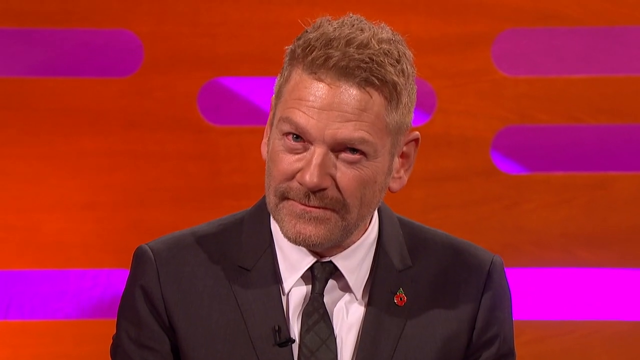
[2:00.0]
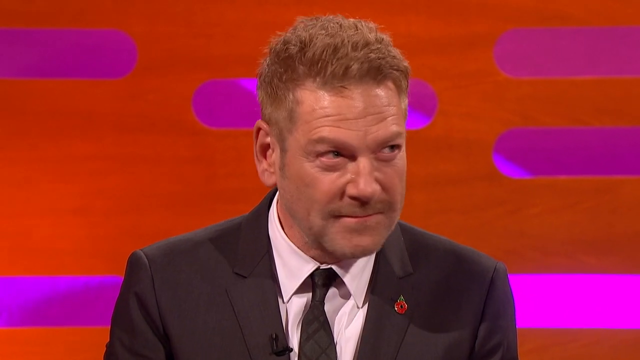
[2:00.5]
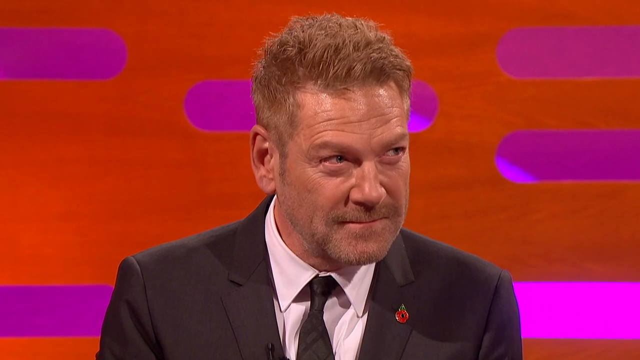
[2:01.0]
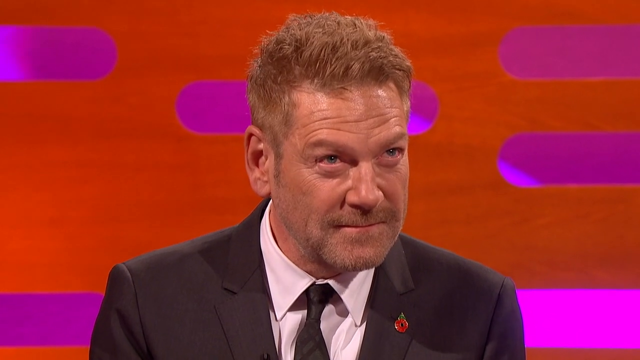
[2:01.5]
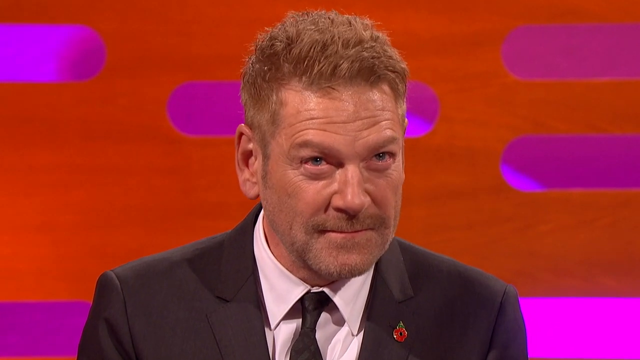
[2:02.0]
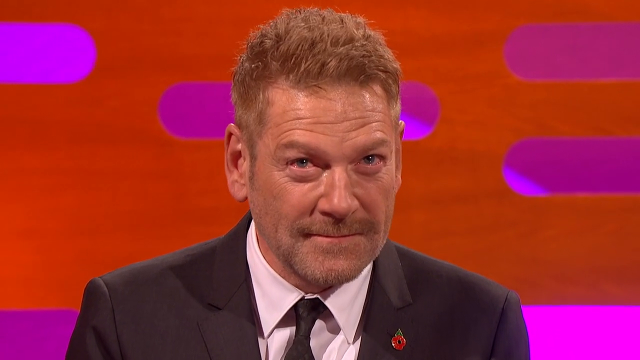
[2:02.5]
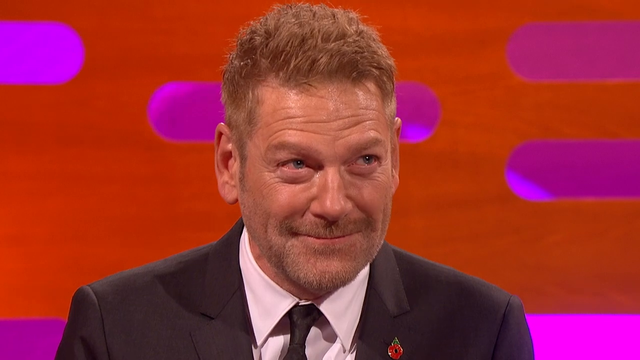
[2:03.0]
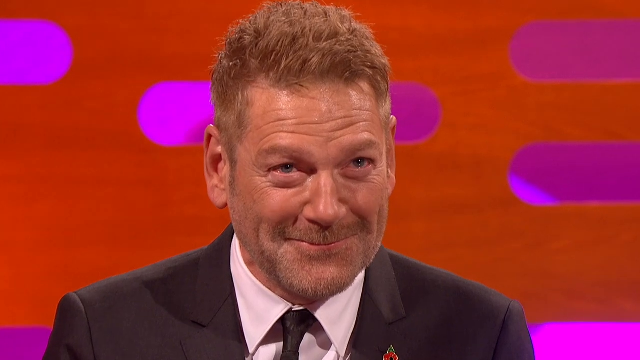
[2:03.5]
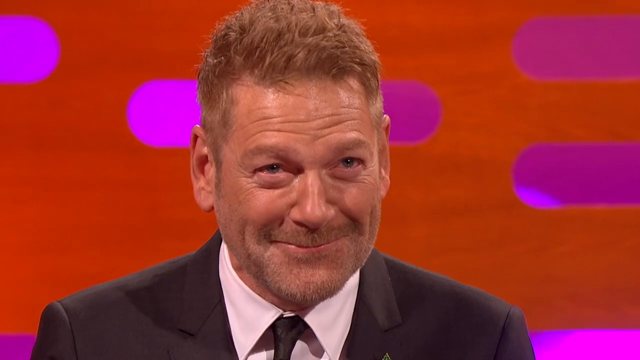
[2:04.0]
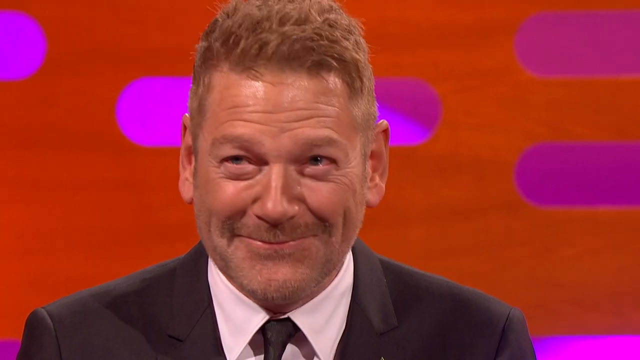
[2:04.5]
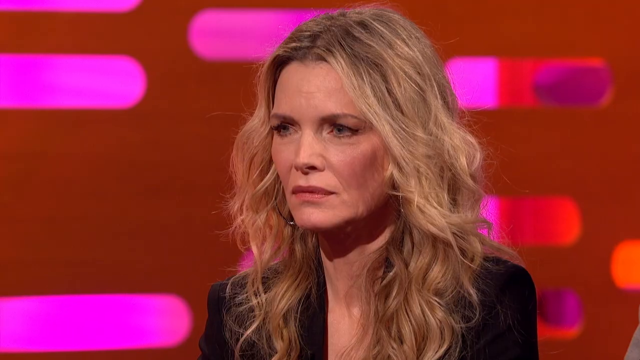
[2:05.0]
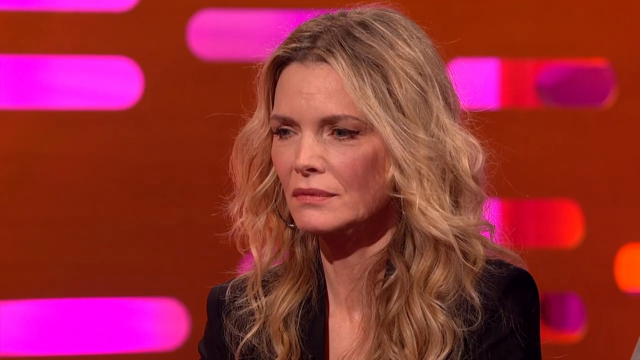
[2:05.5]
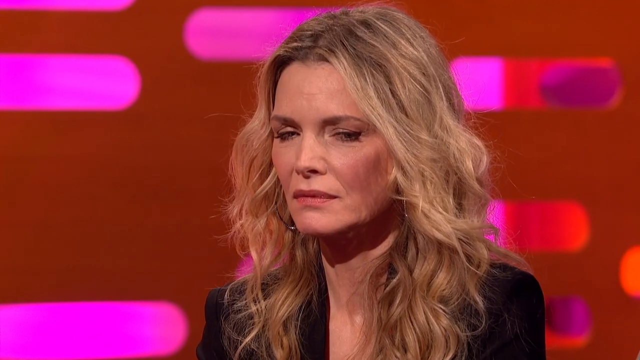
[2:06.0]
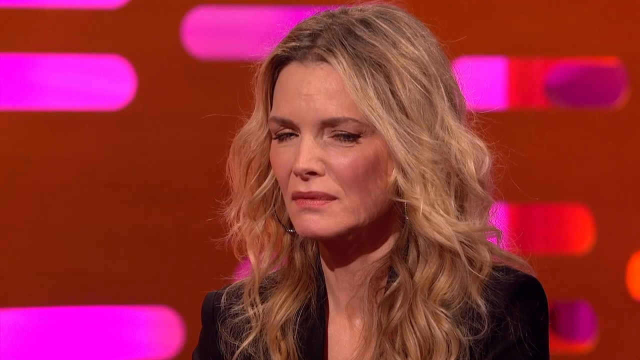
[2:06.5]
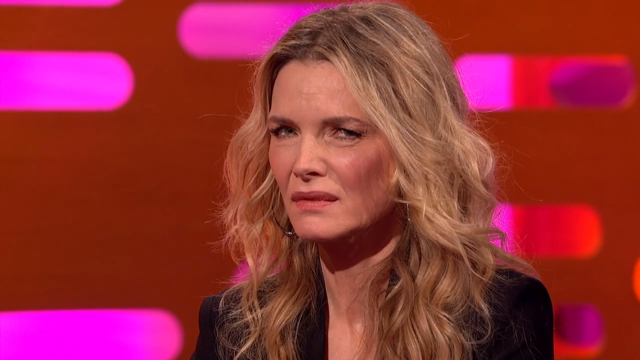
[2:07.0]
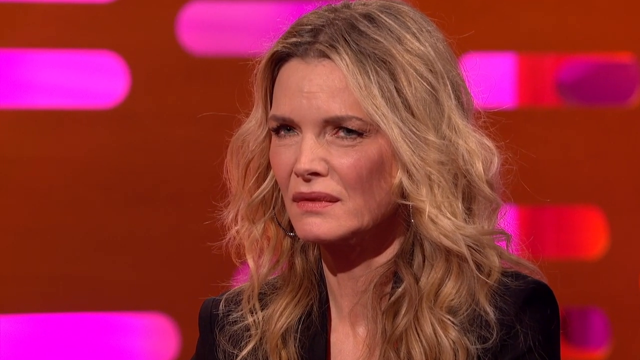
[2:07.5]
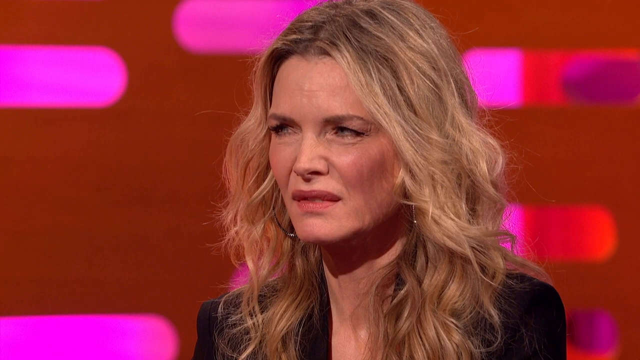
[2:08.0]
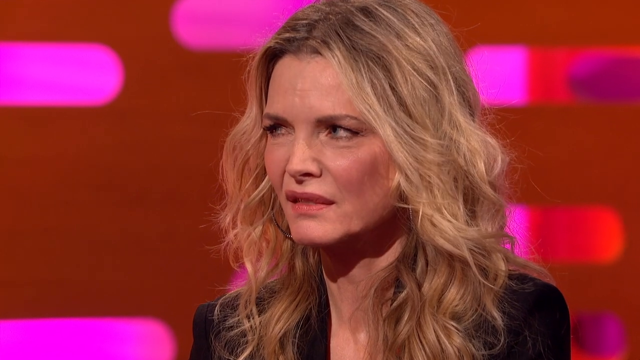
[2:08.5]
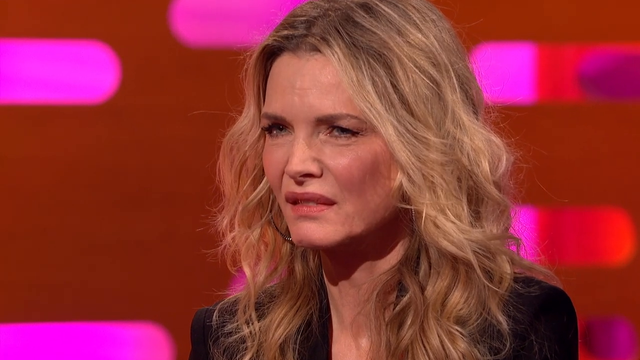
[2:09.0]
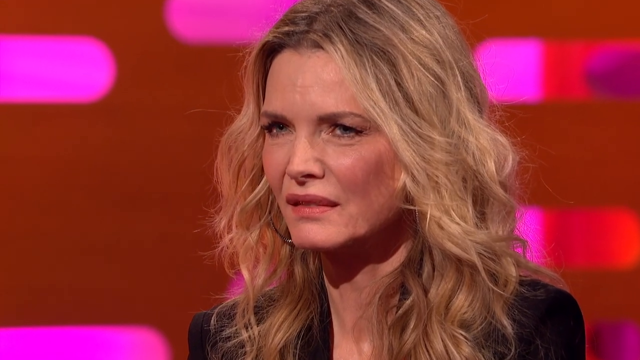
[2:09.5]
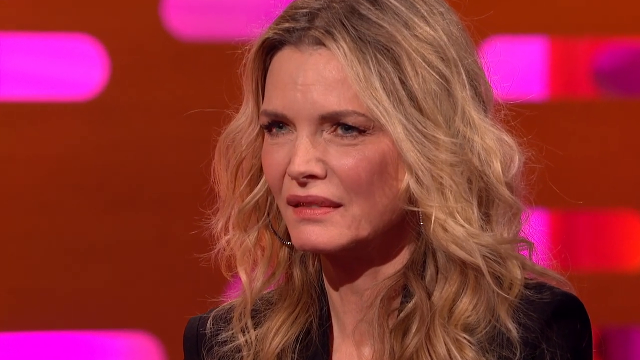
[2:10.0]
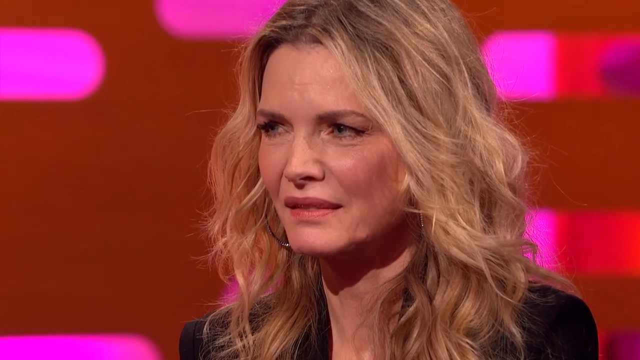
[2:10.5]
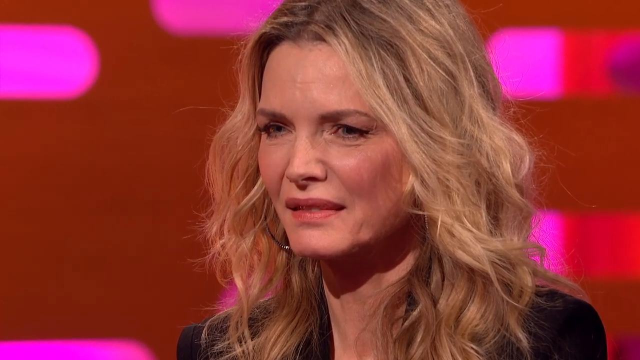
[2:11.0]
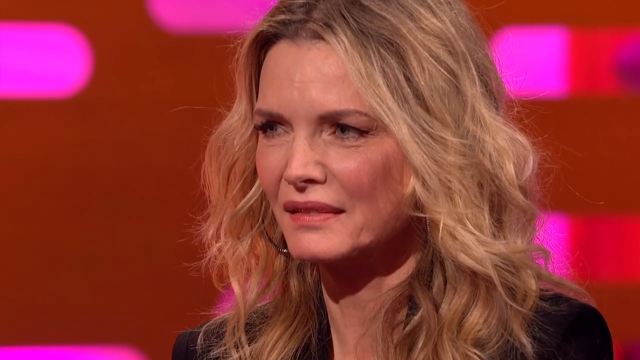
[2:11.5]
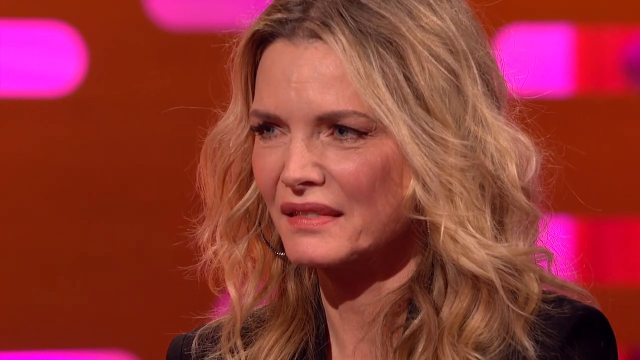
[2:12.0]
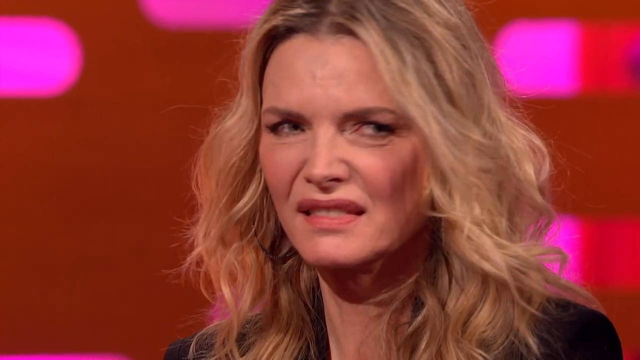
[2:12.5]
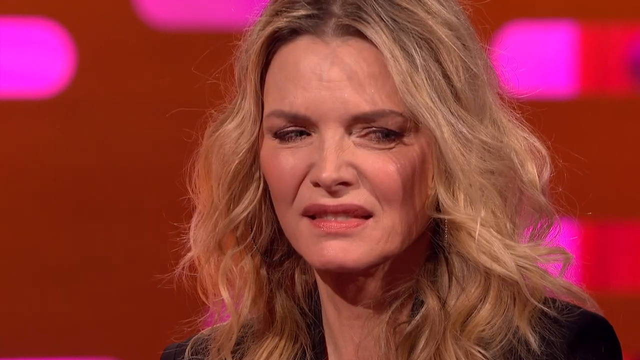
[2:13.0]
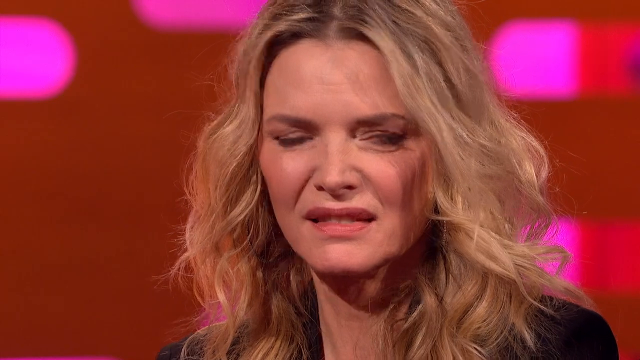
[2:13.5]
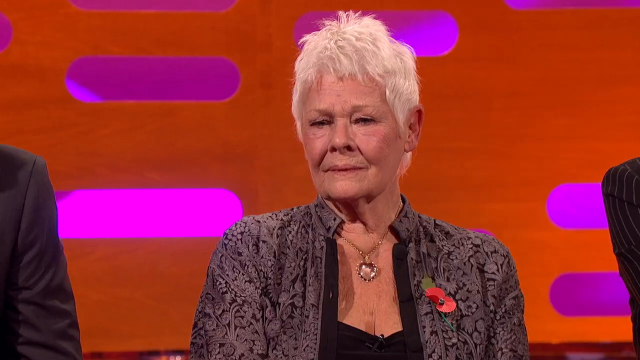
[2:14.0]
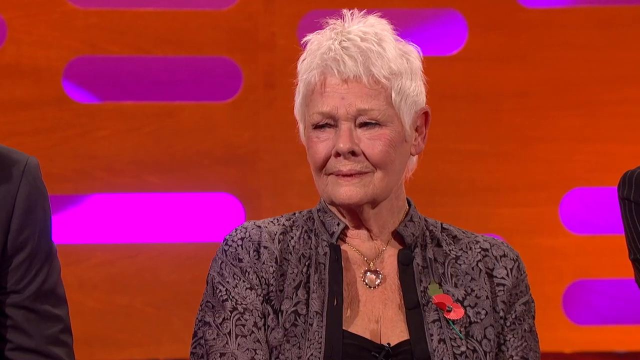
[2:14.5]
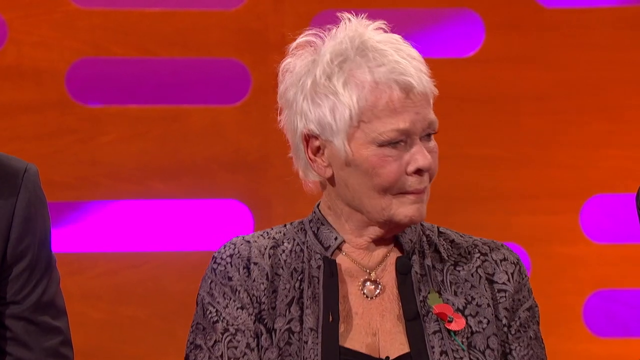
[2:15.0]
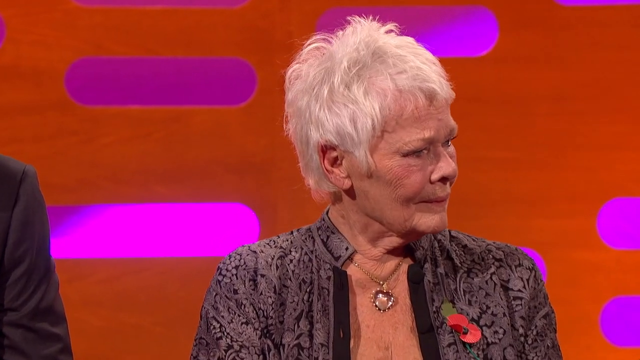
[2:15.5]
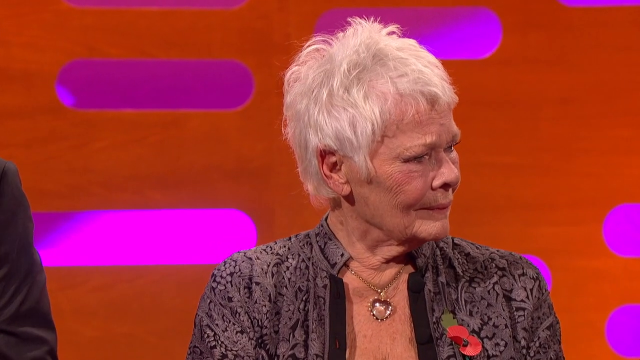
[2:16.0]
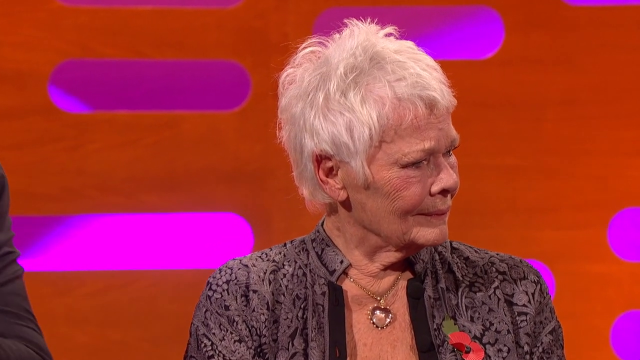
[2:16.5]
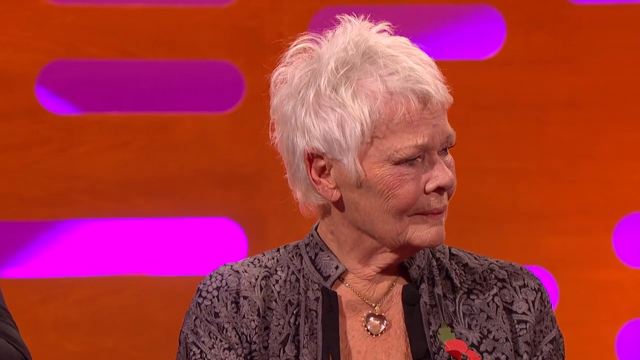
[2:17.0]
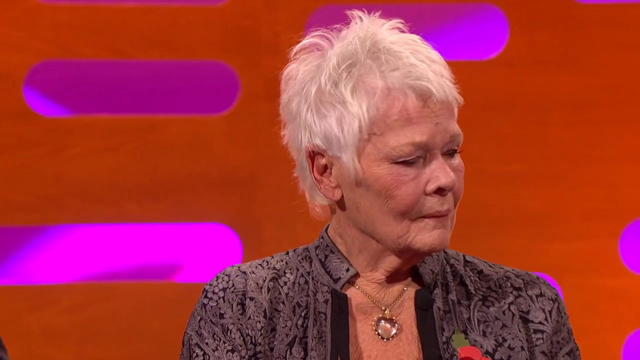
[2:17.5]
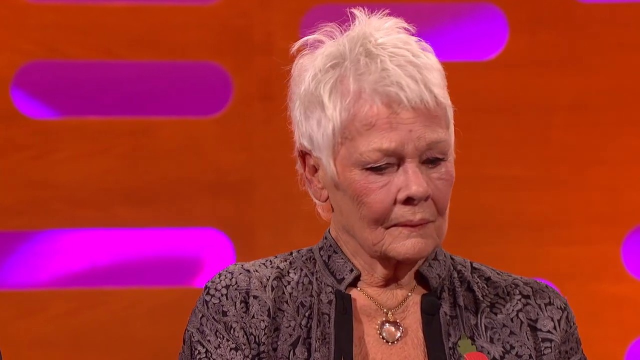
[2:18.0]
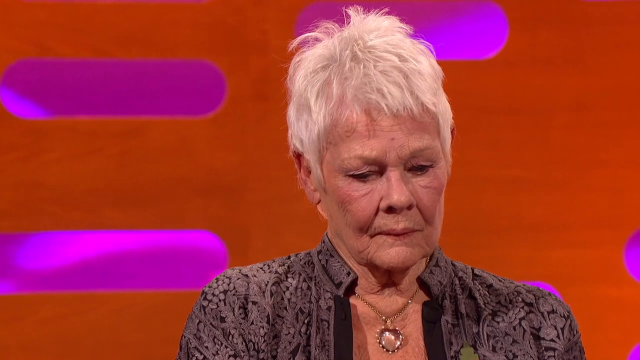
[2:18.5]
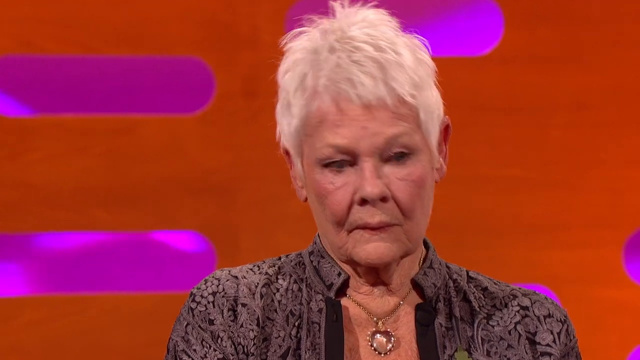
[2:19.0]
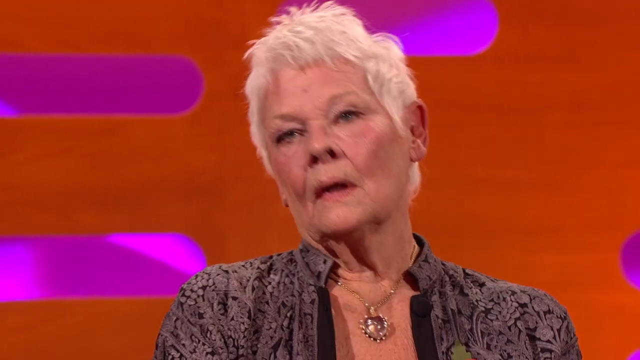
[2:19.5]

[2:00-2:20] The red-haired man looks a little serious, then starts to smile, looking at the others with his head tilted down and his eyes looking up; he seems to be laughing and trying to hold it back. The camera pans to the blonde-haired woman, who looks kind of somber, then squints and looks almost disgusted at something. Her eyes dart back and forth, the corner of her upper lip twitches, her mouth and nose quiver, and she shows a little teeth while looking to her left and right as if she smells something. The camera pans to the white-haired woman, whose face also looks disgusted and kind of concerned as she looks around at the people around her. She seems to be holding back a laugh, getting into a serious mode by leaning backward.